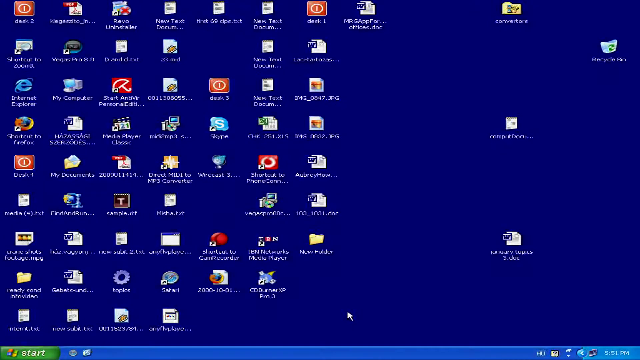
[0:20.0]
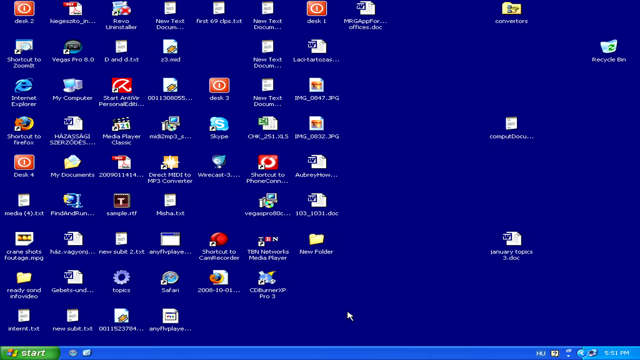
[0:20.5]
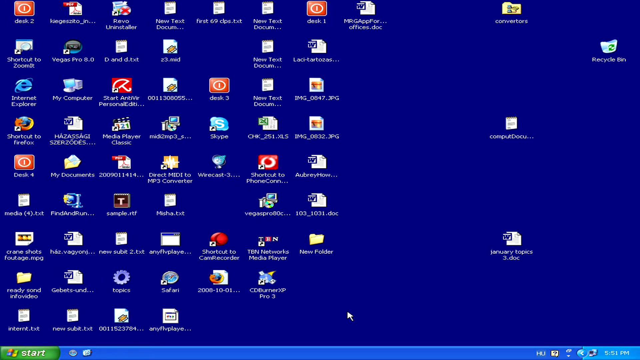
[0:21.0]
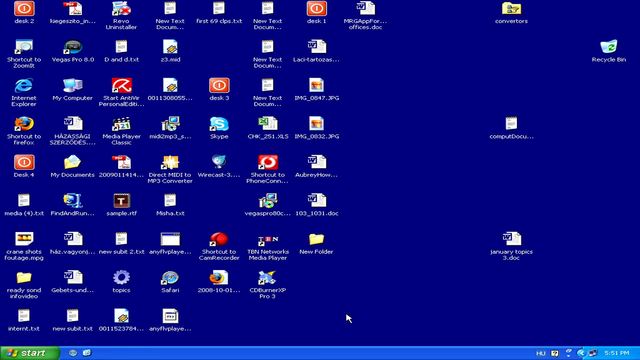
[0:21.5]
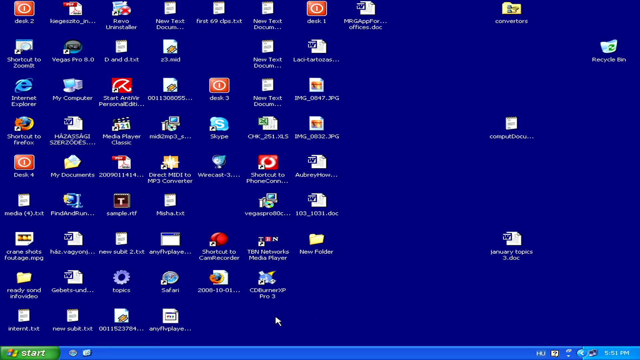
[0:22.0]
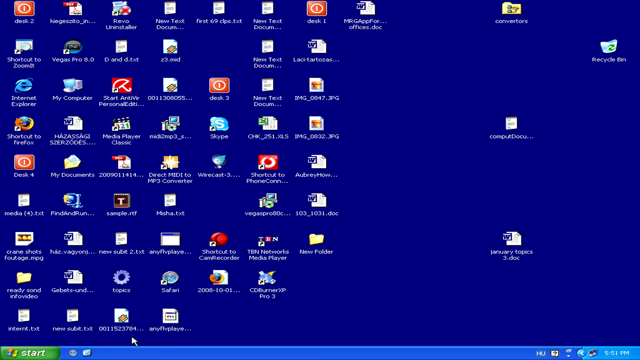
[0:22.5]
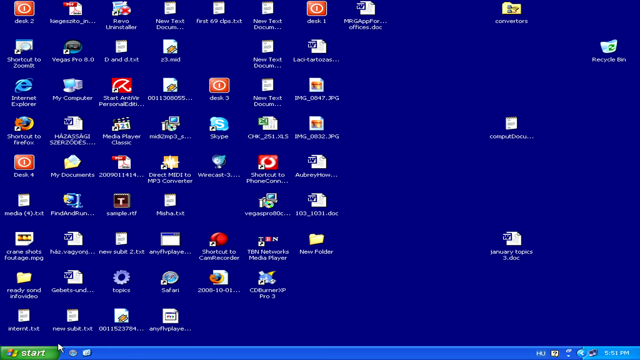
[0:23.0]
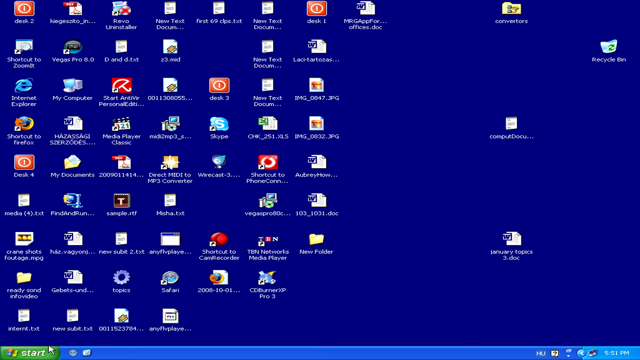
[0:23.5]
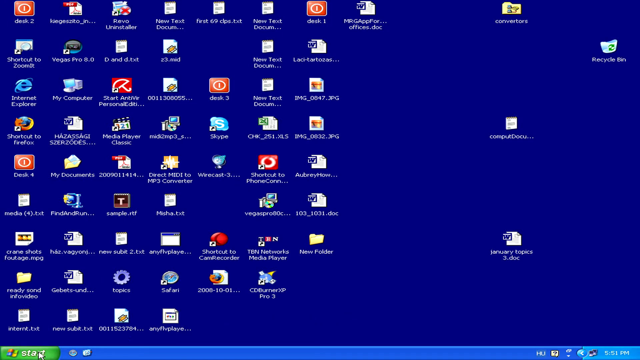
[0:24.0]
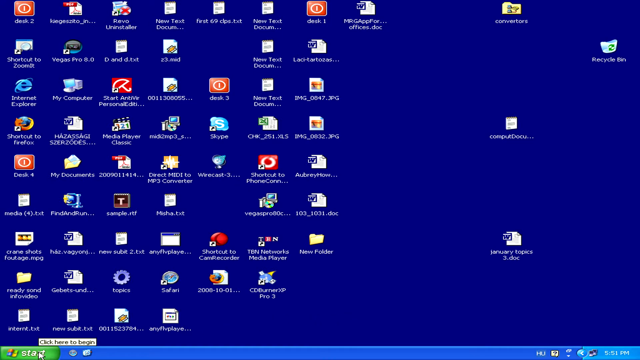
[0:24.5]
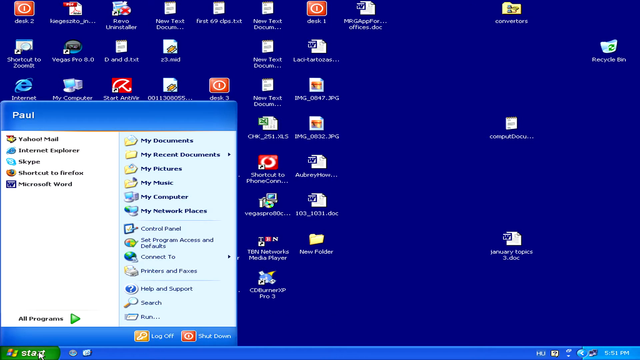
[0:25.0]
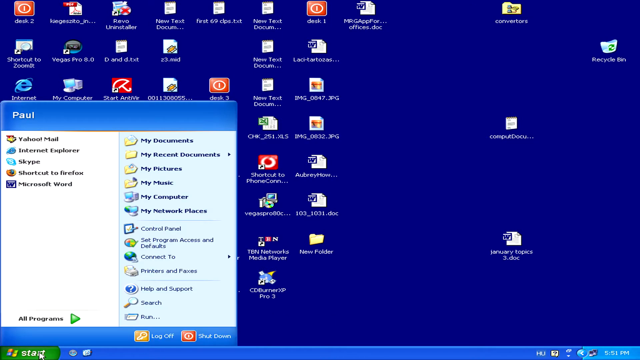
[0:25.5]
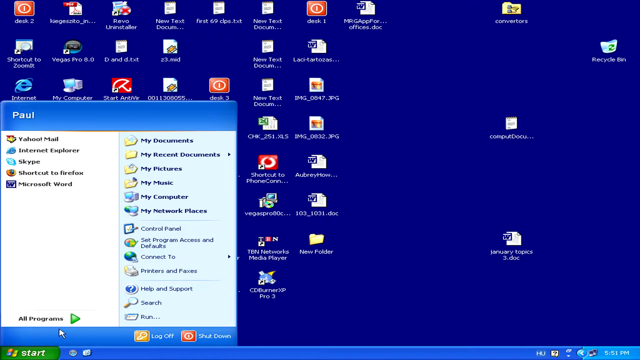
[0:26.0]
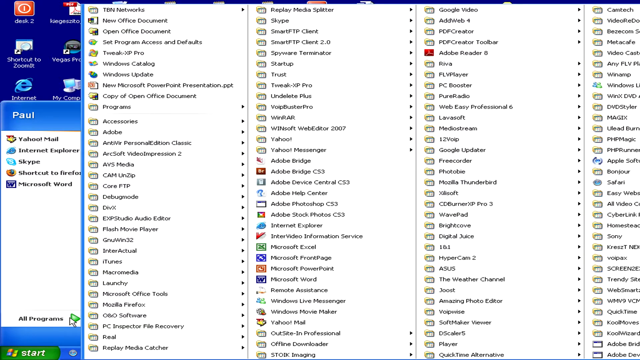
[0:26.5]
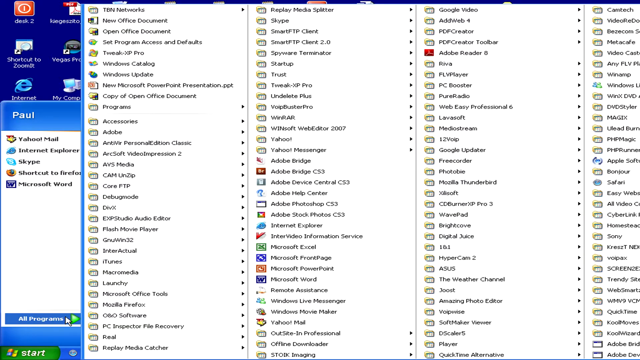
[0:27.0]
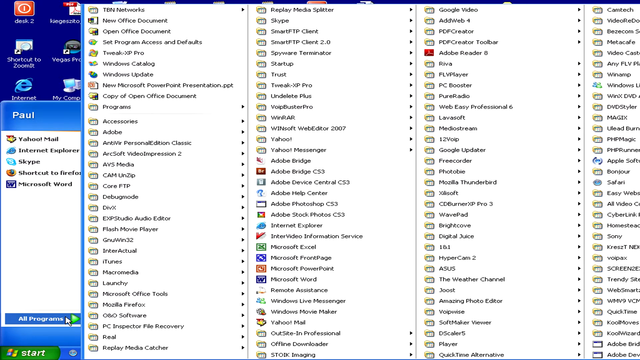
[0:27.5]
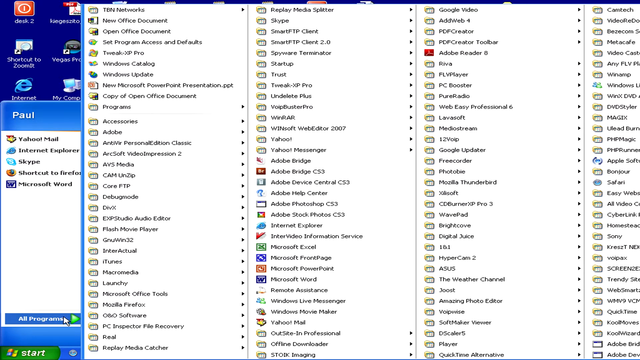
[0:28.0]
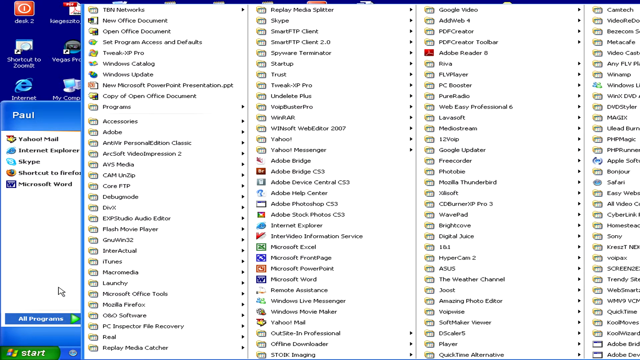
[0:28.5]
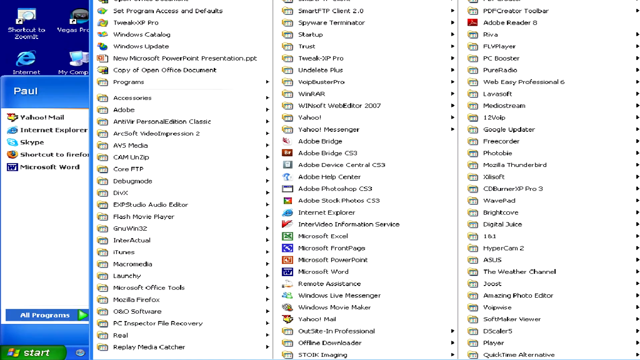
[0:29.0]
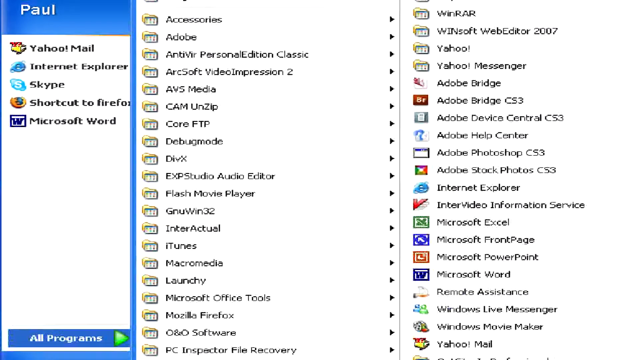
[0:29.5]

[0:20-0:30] A Windows desktop environment is shown, apparently related to software. The desktop has Internet Explorer, a shortcut to Firefox, Safari, and a My Computer icon.